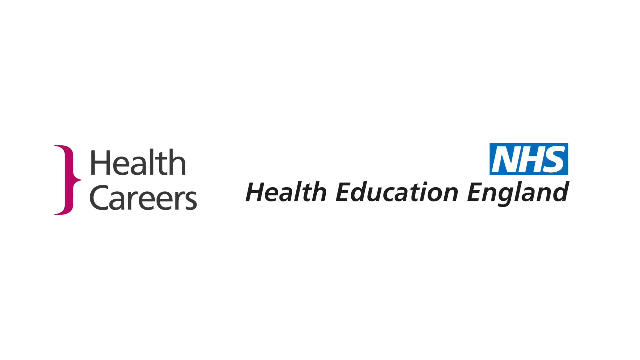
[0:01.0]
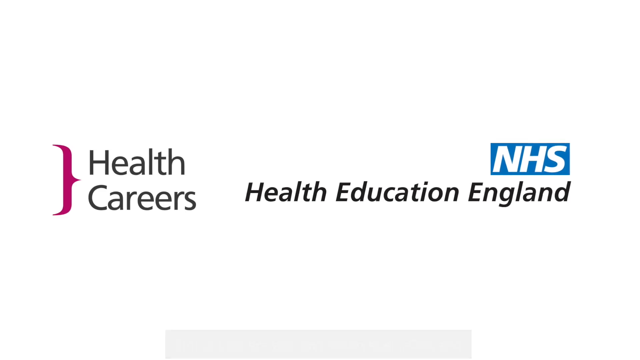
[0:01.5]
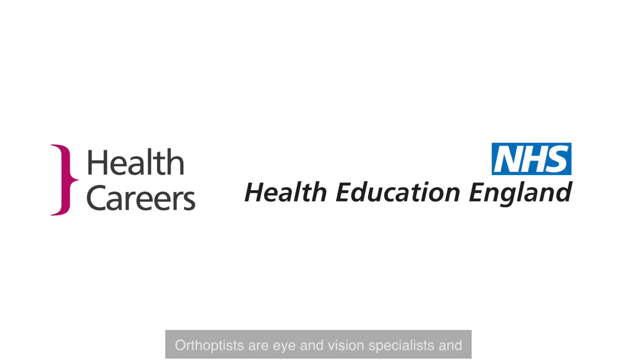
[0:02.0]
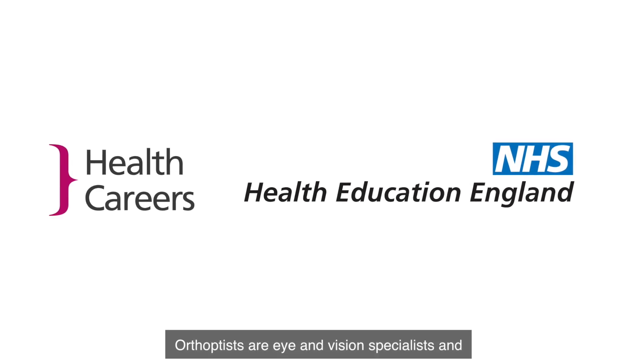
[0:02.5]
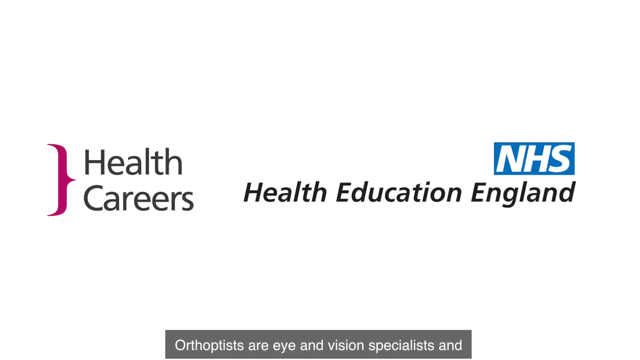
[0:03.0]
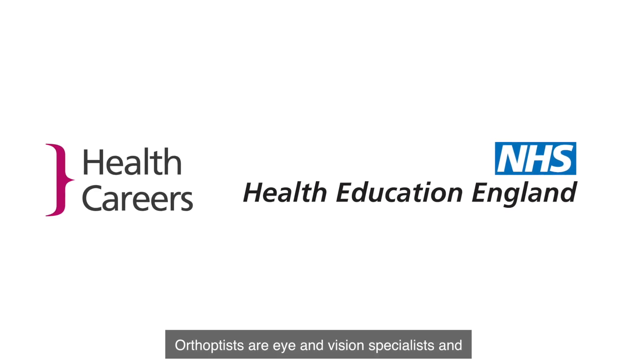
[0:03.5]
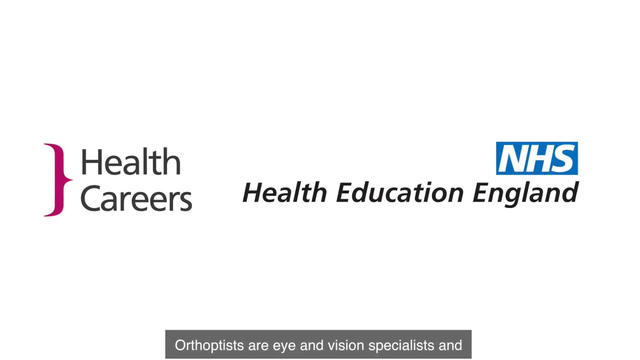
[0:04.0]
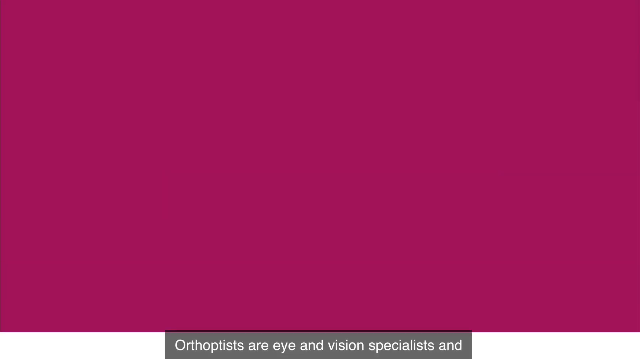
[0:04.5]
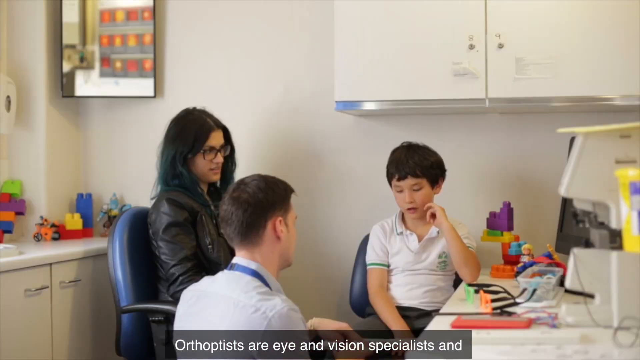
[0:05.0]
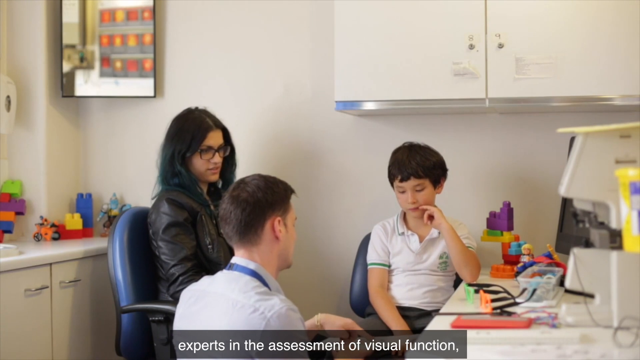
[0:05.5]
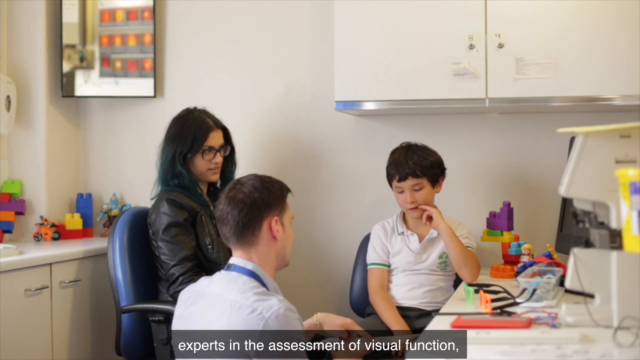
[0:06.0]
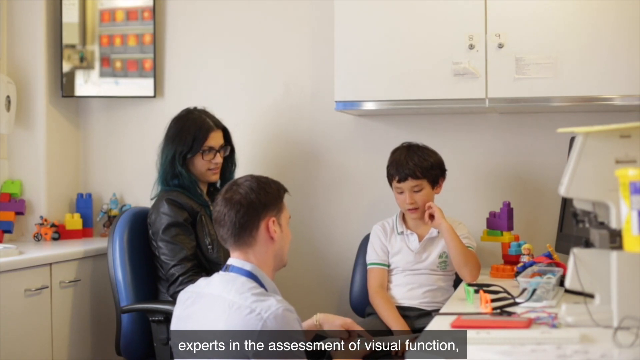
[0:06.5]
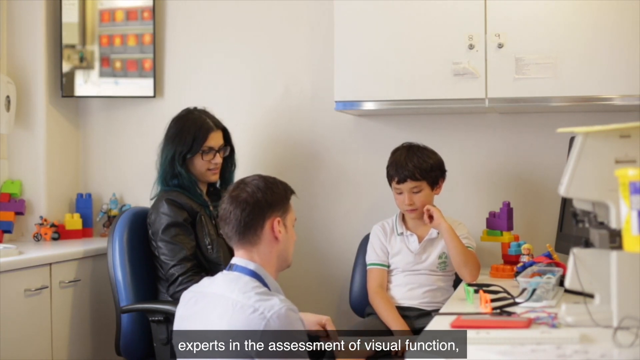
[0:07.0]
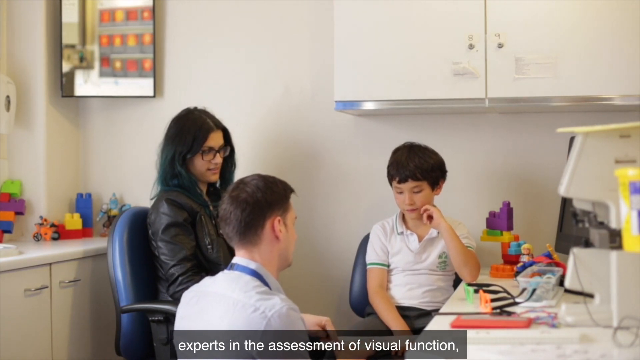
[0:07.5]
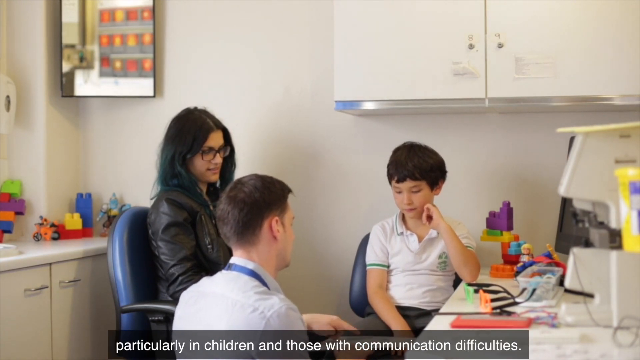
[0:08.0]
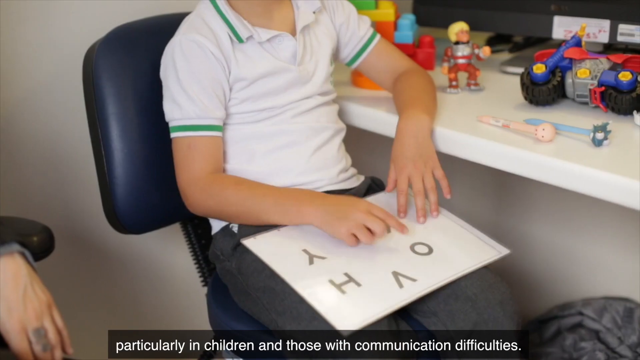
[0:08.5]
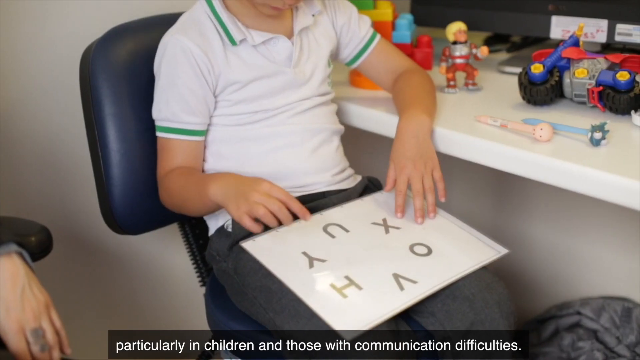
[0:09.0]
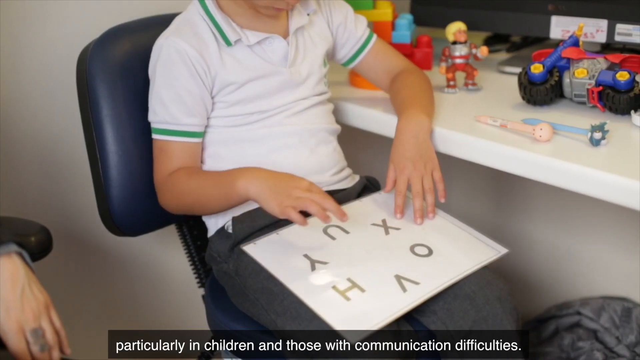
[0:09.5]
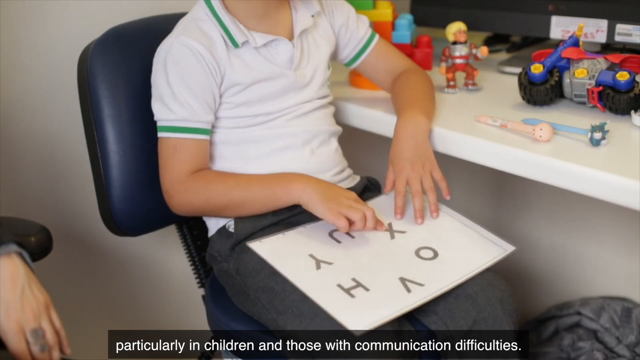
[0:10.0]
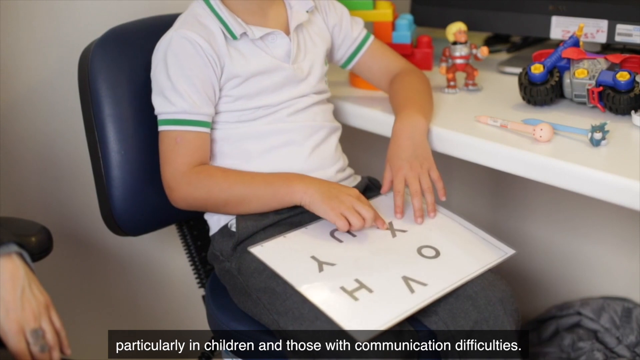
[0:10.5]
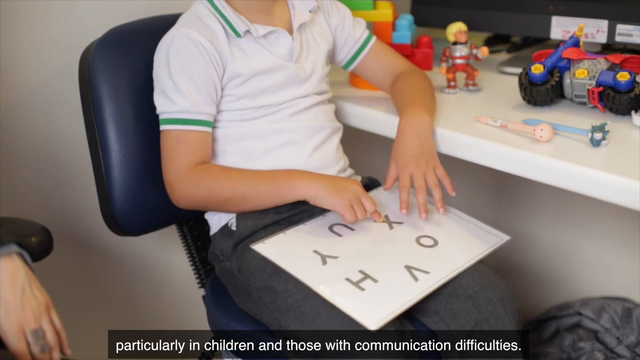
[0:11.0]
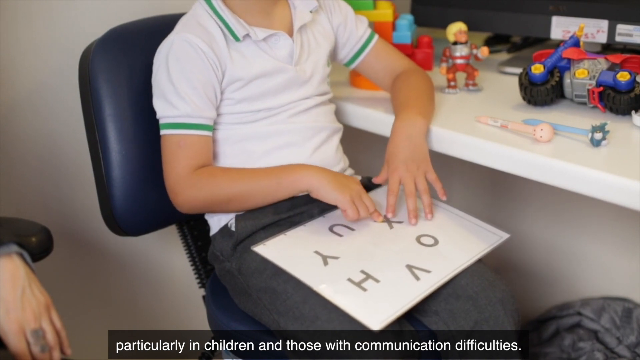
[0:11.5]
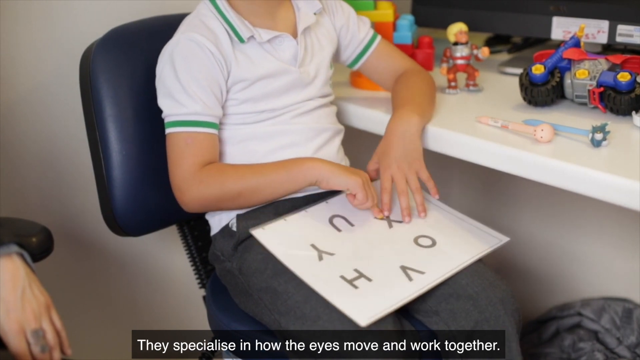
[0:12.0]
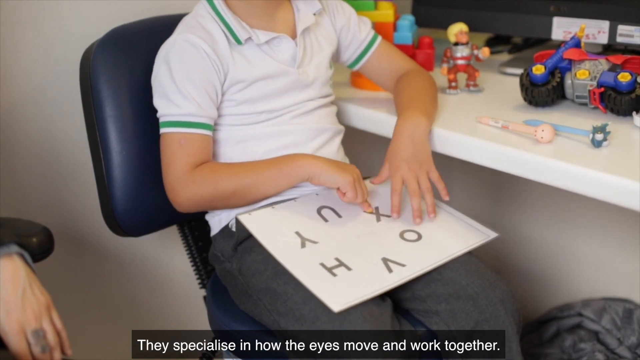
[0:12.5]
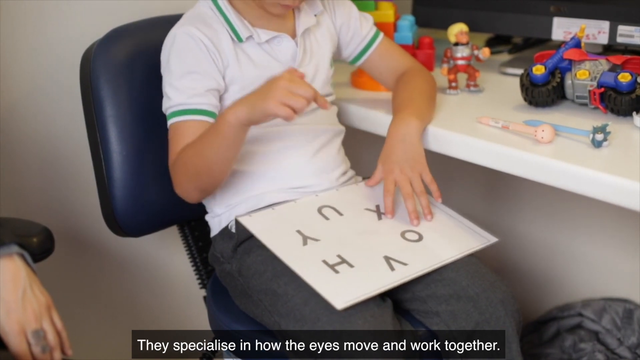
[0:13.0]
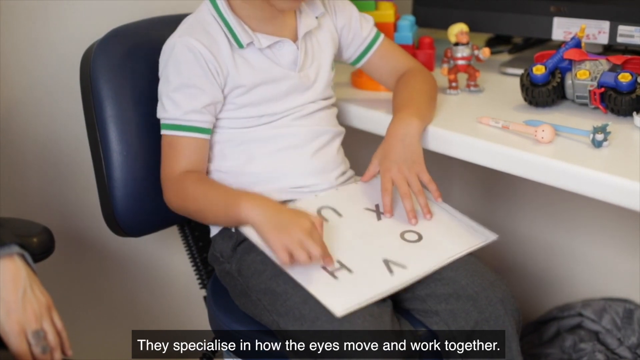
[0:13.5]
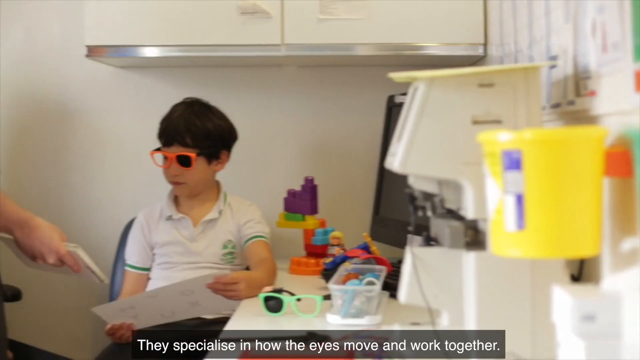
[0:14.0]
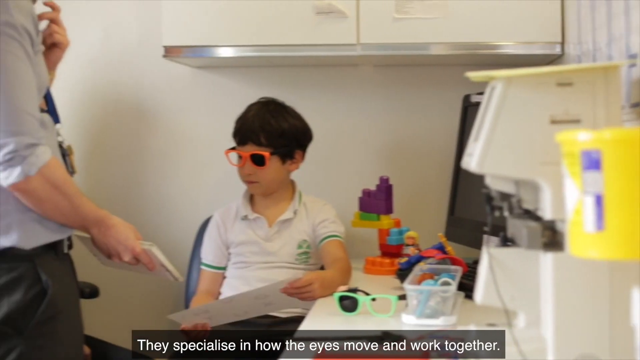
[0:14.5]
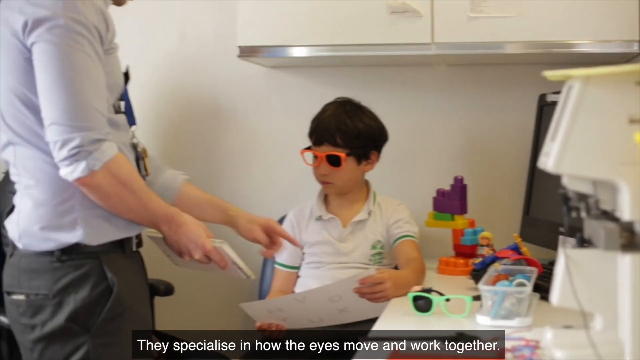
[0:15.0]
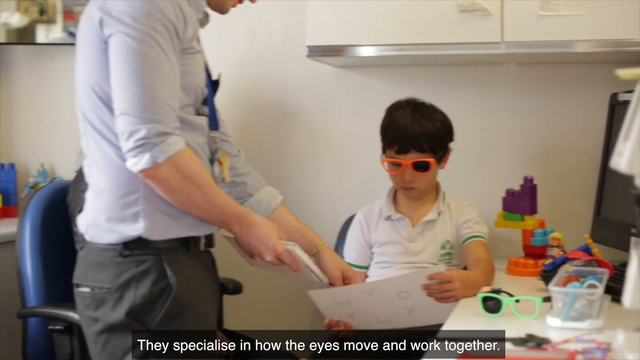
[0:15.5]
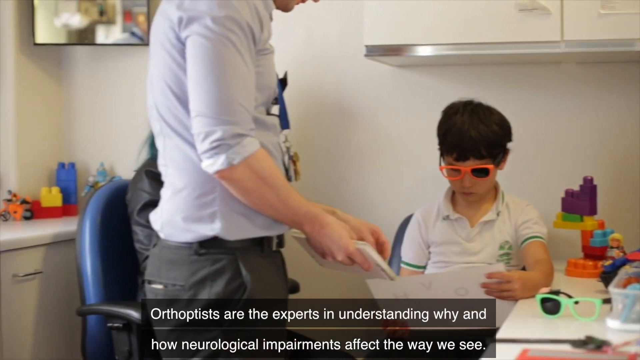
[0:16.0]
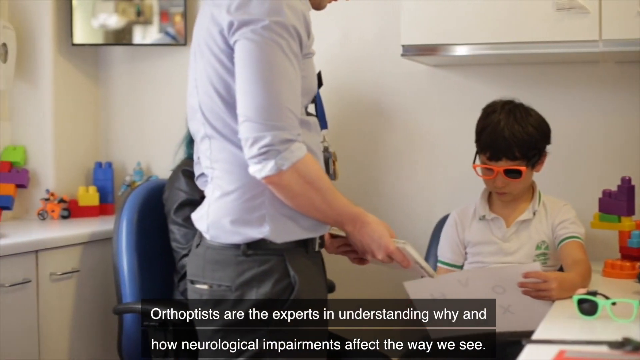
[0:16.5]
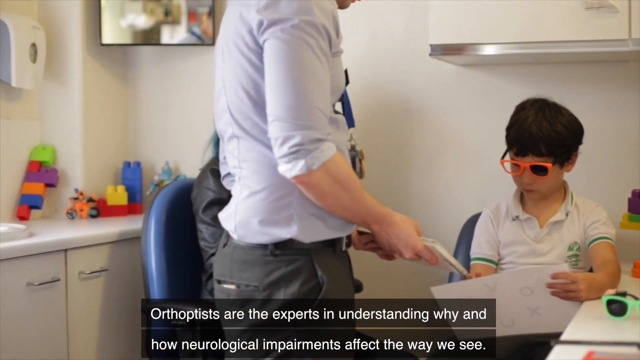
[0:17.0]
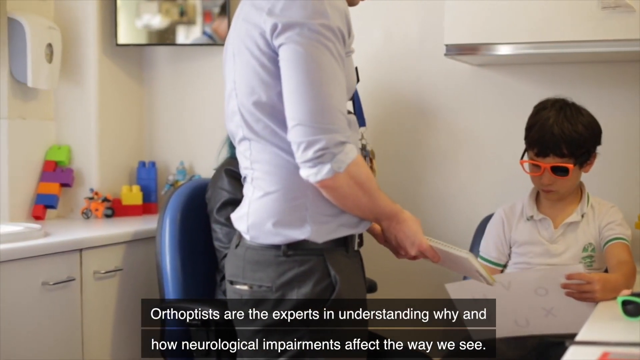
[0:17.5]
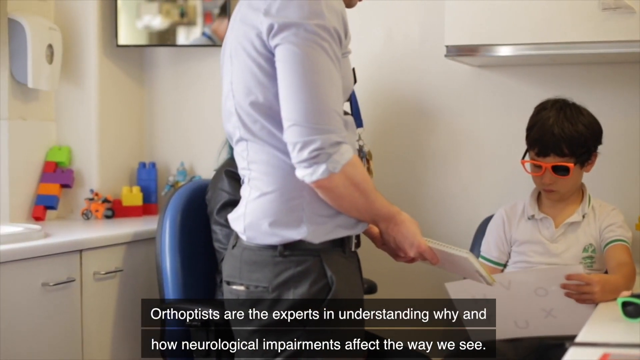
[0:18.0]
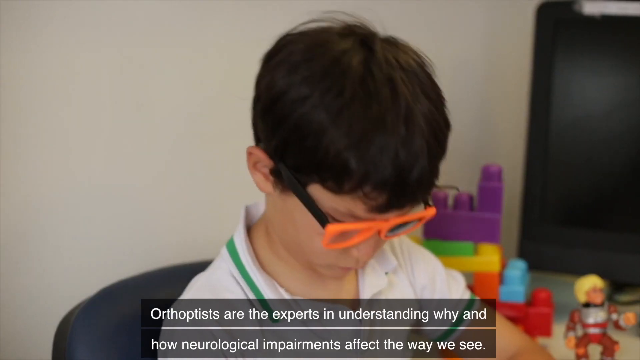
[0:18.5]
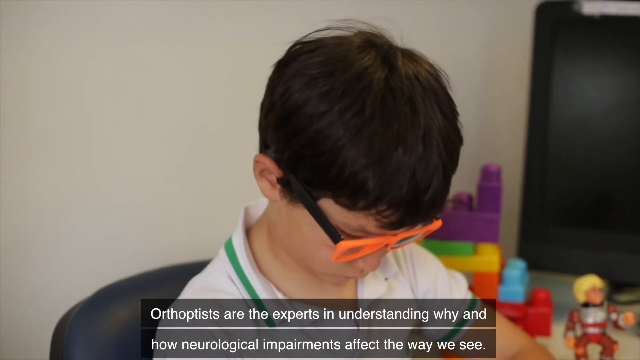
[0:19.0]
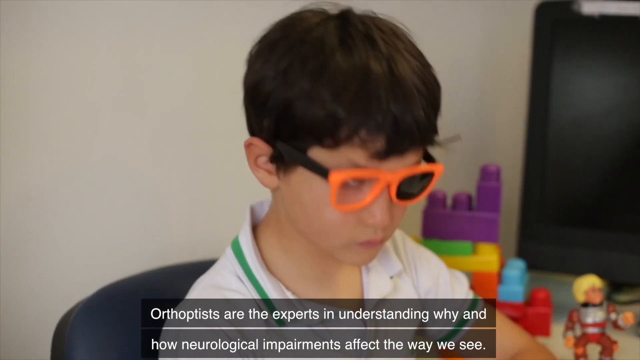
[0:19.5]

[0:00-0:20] The video opens on a blank page, then a gradient white and black sheet appears that says "Health Careers" on the left with a little burgundy bracket. To the right of that it says "Health Education England", and just above "England" is a small blue rectangle with "NHS" in white lettering. A kind of purplish curtain falls down and goes up, revealing a doctor's office with white walls and white cabinets. A mirror is up on the wall at the upper left, and there is a counter with a sink. A woman who looks to be in her early 30s is sitting in a blue chair. The doctor is a young man with short dark hair wearing a white jacket, with what looks like a blue stethoscope around his neck. He is looking at a little boy sitting in a chair in front of him. The boy has somewhat longer, bushier dark hair and looks to be maybe 10 or 11 years old; he wears a short-sleeved white shirt and jeans, has his left elbow propped up on the desk, is kind of holding his face up with a couple of fingers, and looks a little sad. The mother has long dark hair, wears glasses with brown rims, and wears what looks like a dark leather jacket. The desk holds a lot of things, including many toys for children. The camera zooms in on the boy, who has a piece of white paper with different large letters on it in his lap. The fingers of his right hand point to the X on the sheet while his left hand lies on the edge of the paper, and then he points to the H. Next, the boy is in the chair wearing a pair of red glasses with the left eye darkened out and the right eye clear. He holds the paper up, and the doctor, now standing beside him holding another paper, points to the paper the boy is looking at.